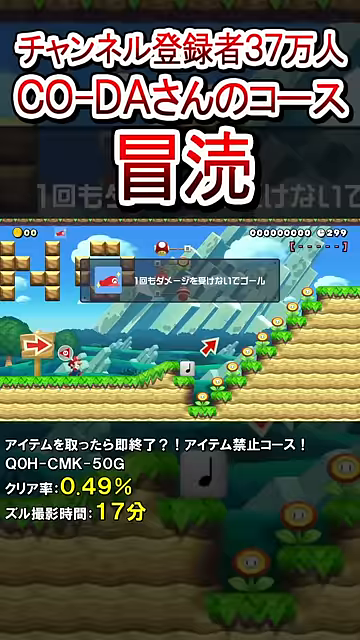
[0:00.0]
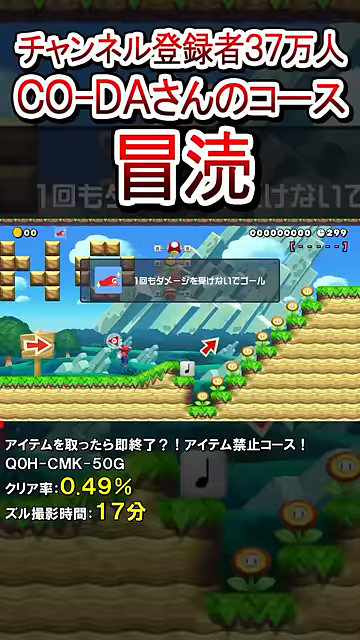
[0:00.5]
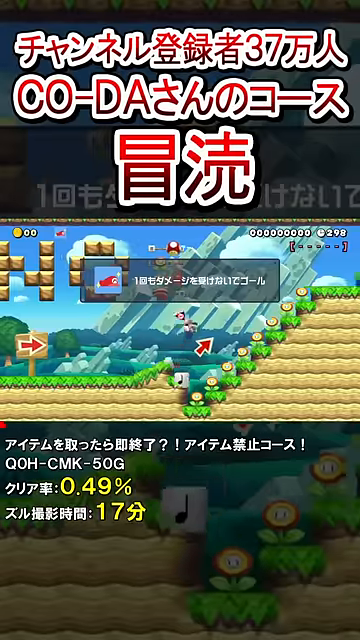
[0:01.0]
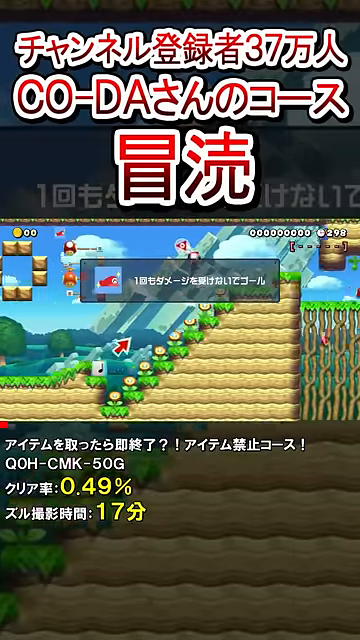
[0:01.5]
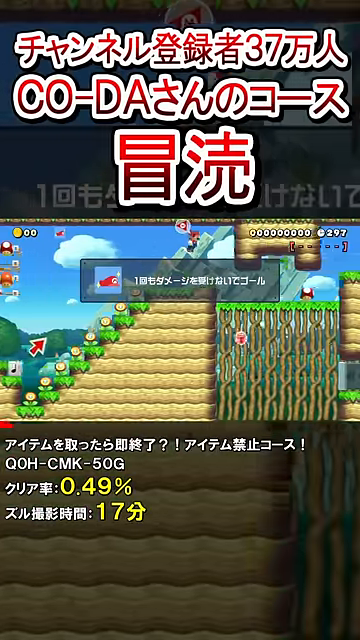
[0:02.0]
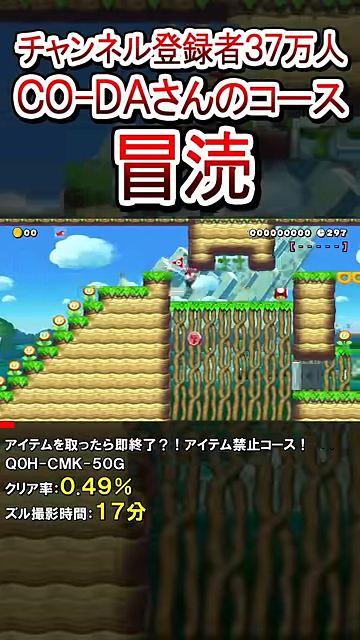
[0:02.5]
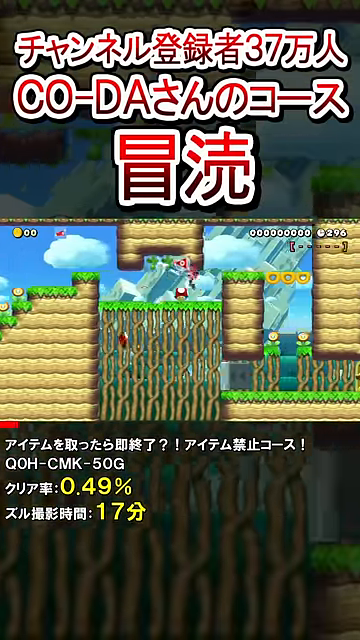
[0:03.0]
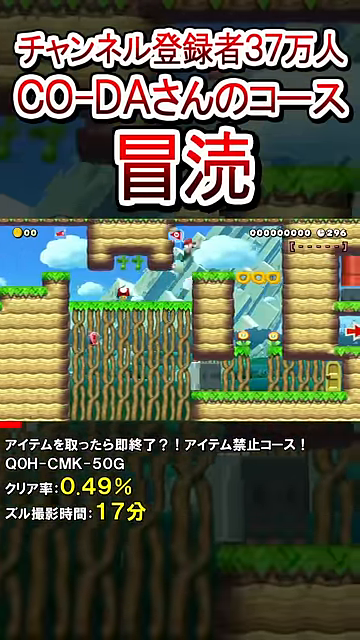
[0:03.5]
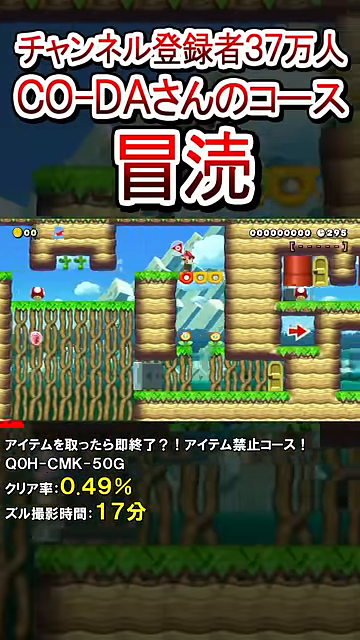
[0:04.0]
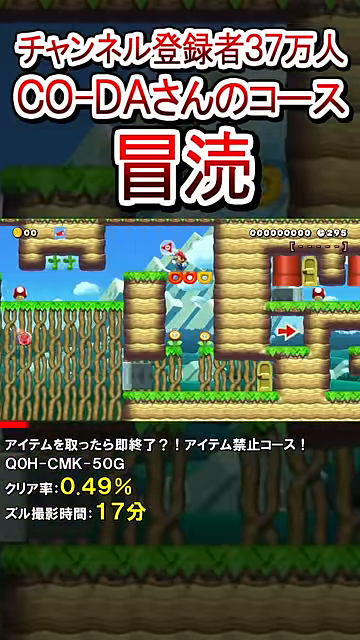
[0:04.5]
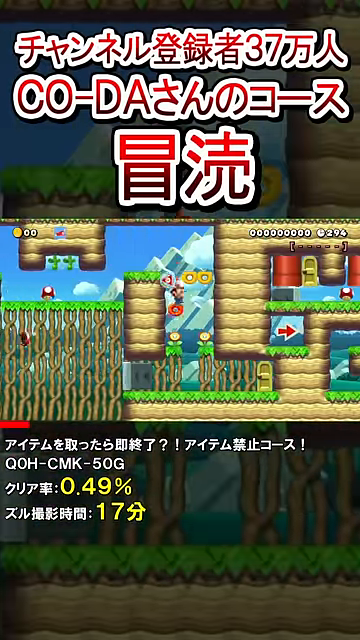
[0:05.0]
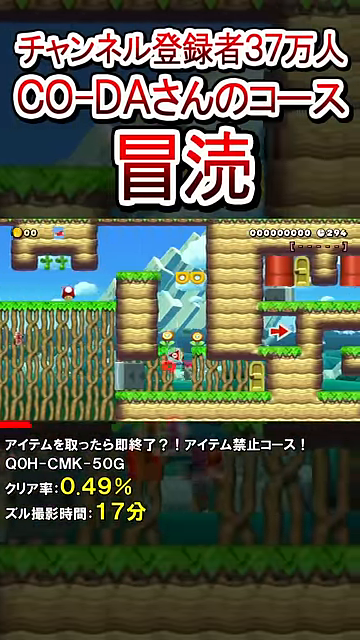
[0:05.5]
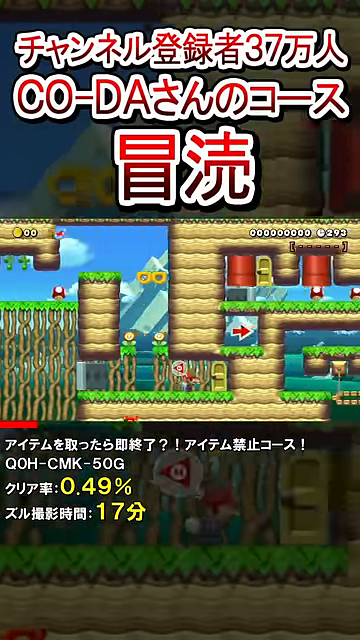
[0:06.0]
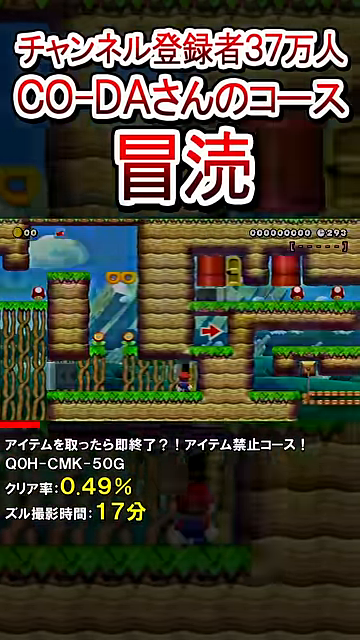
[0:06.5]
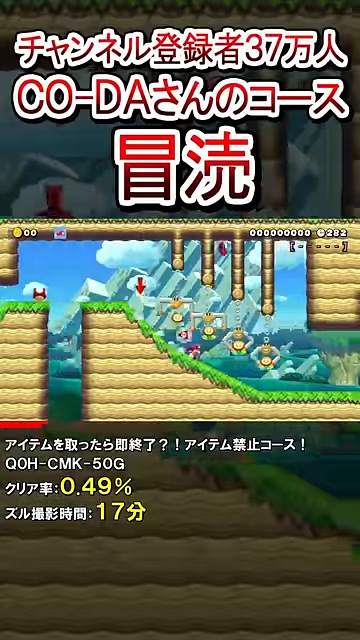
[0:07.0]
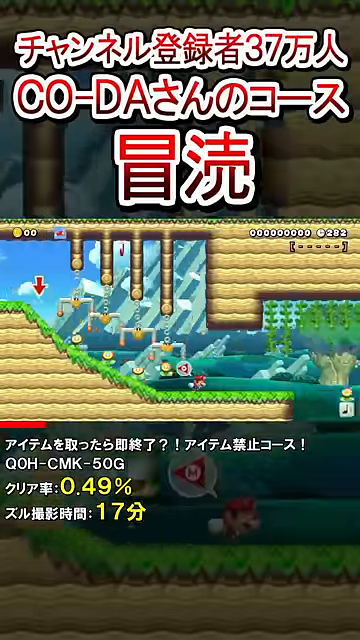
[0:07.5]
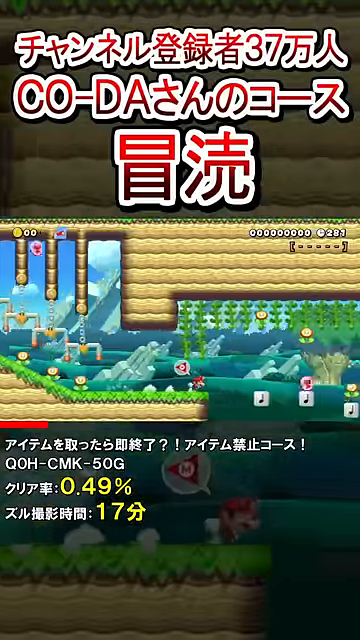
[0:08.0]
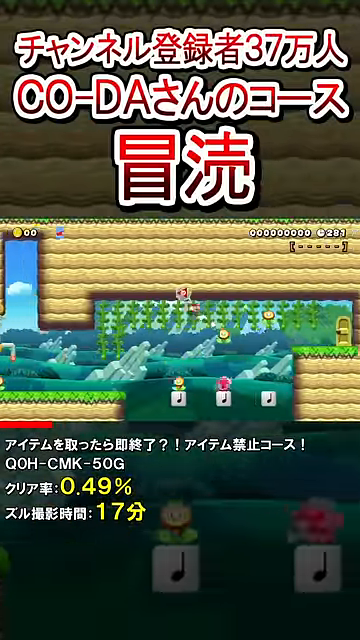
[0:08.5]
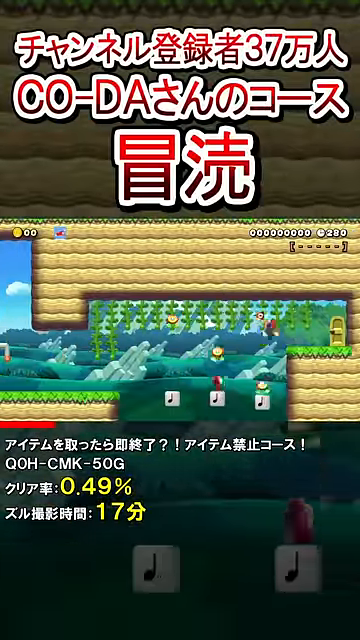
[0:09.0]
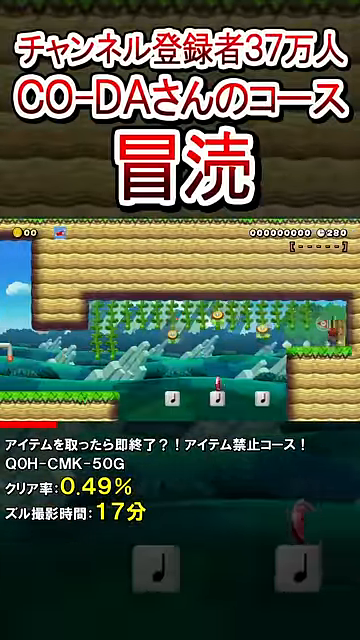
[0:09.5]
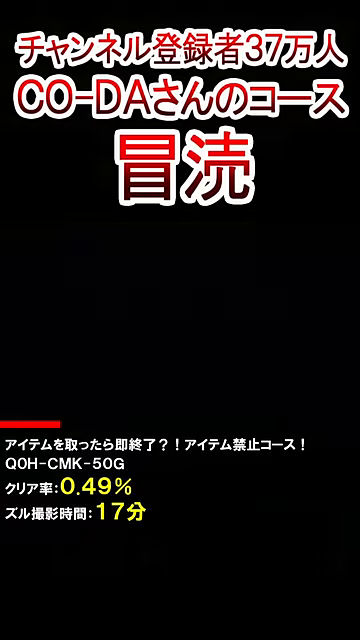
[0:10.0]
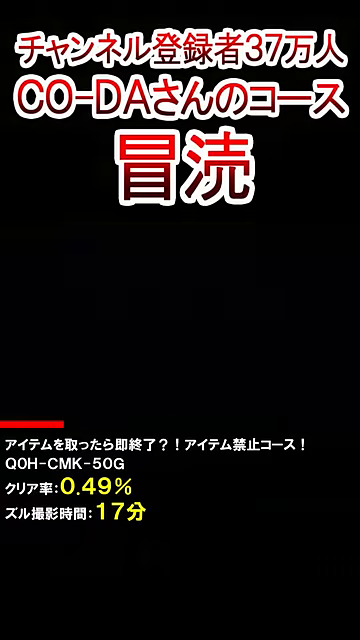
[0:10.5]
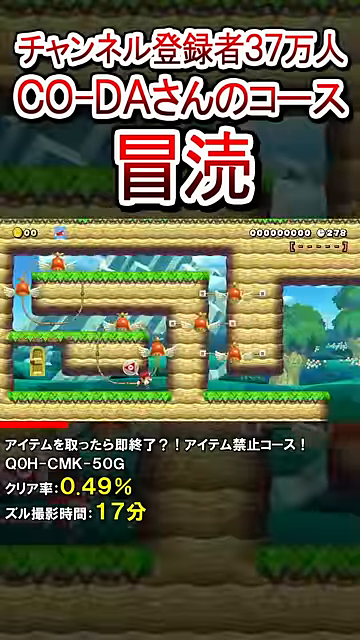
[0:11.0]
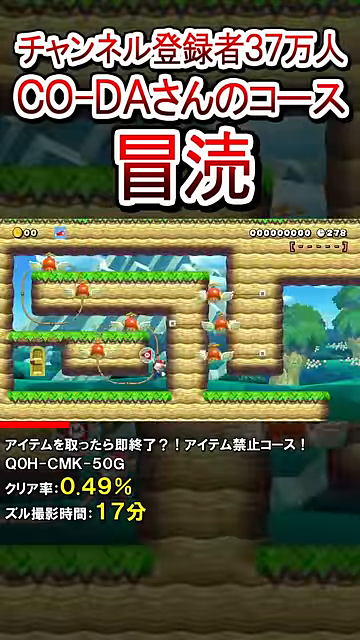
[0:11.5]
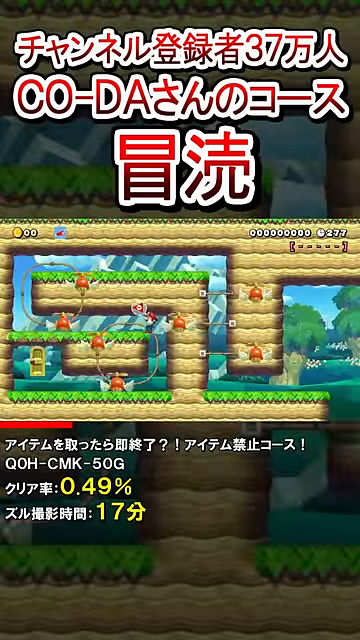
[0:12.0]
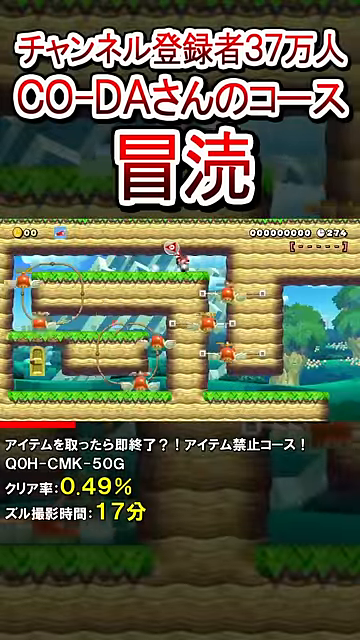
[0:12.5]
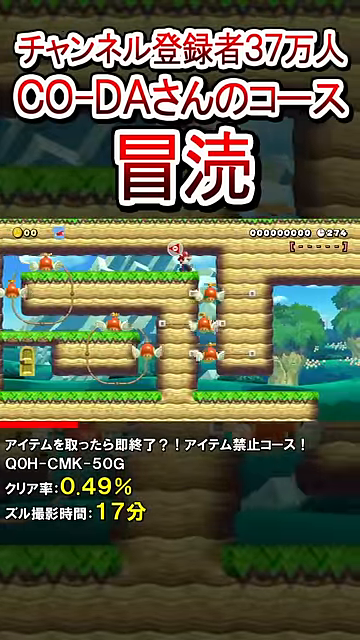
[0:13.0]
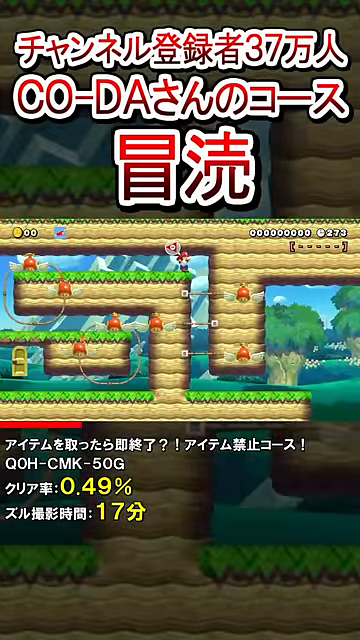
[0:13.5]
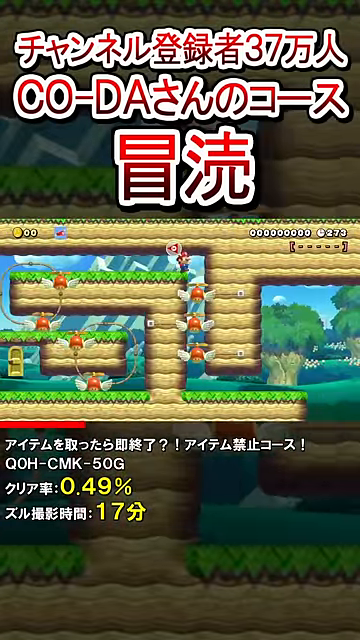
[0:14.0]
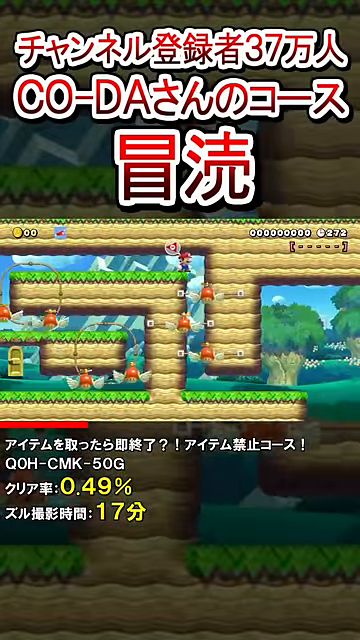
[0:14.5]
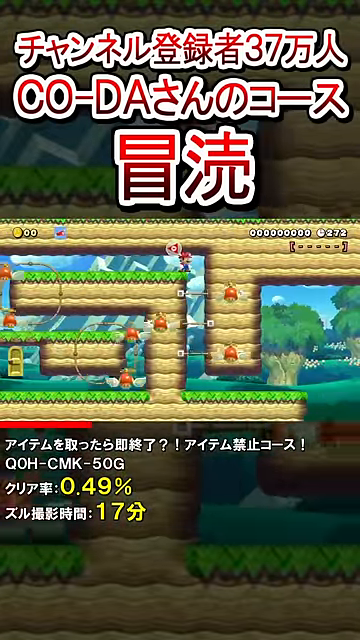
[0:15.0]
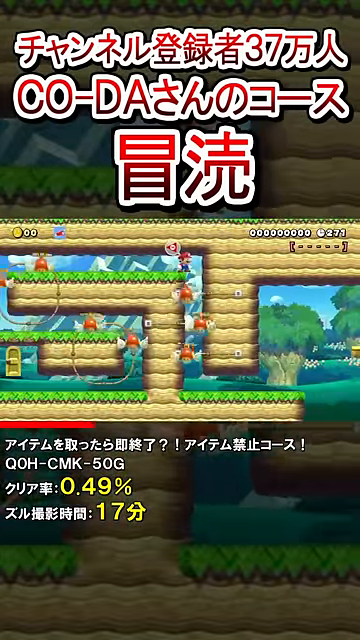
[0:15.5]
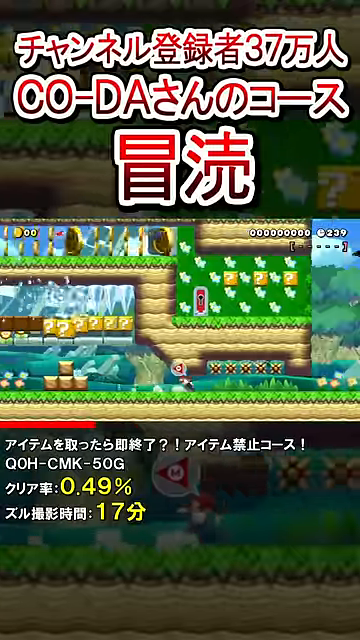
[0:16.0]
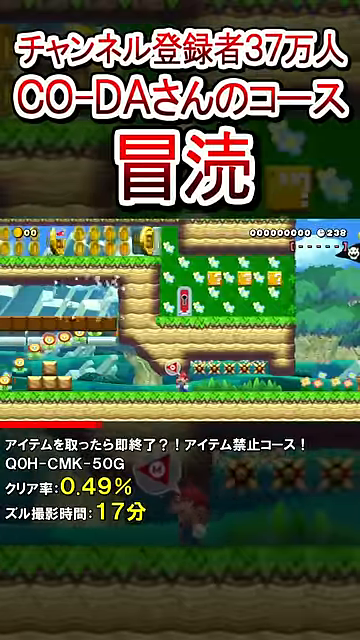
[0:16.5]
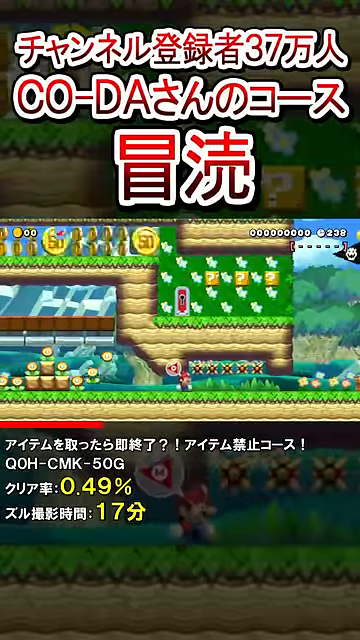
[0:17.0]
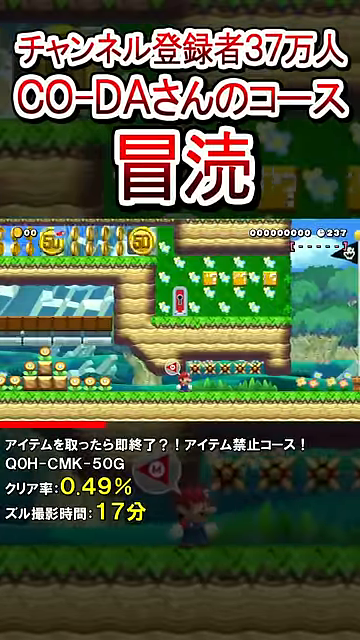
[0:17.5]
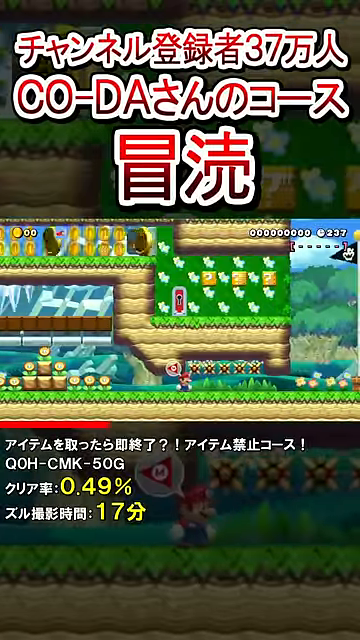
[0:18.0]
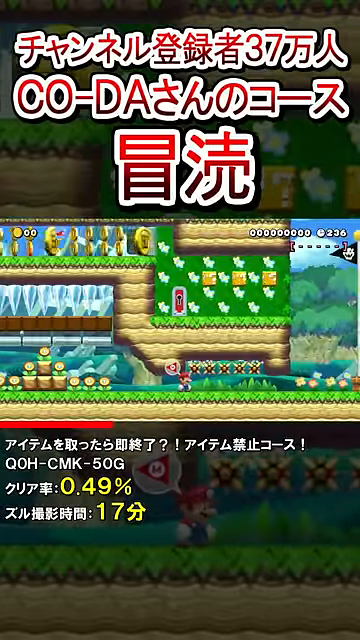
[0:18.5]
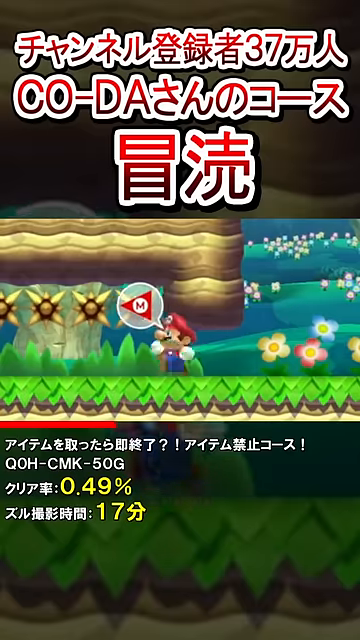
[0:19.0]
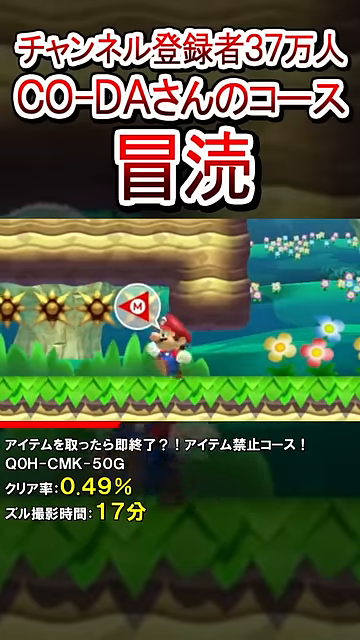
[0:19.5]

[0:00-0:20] The title and the on-screen text are in Japanese. The video shows gameplay, and beneath the game are stats, all in Japanese except for a couple of numbers: 0.49% and 17 with a symbol to the right of it. The game is definitely a Mario game, a Super Mario type of game similar to Super Mario Brothers but not that game. Mario runs through collecting coins and avoiding flying creatures. It is as if he is running through tunnels, with different routes he can take, and he jumps from one side of the tunnel system to the other. He appears to have collected several power-ups or bonuses, and whoever is playing looks skilled at the game.